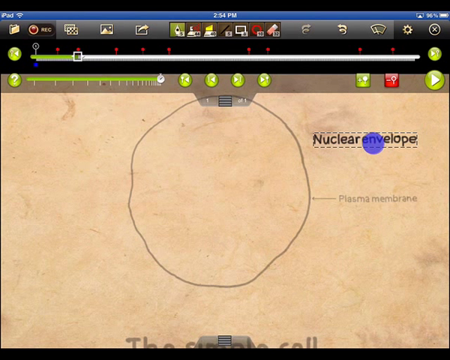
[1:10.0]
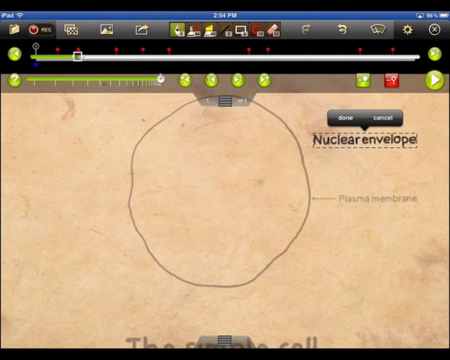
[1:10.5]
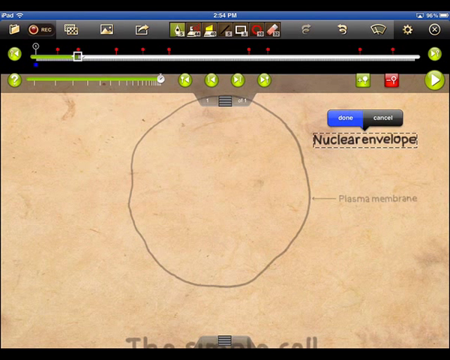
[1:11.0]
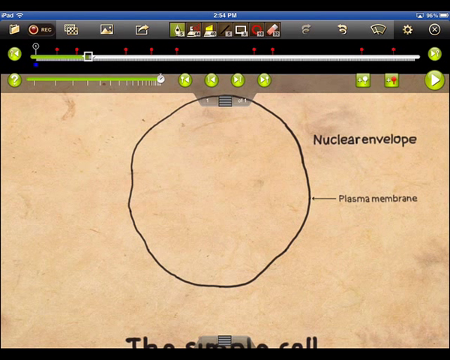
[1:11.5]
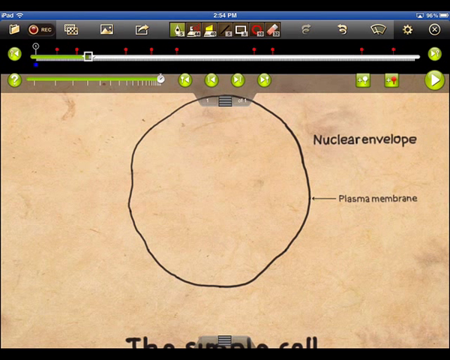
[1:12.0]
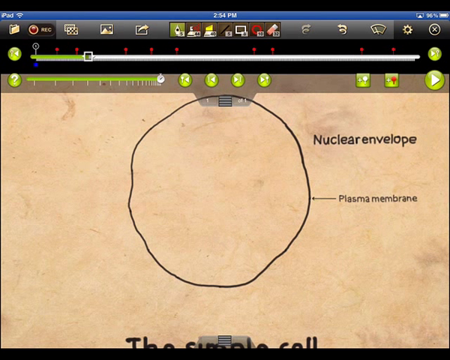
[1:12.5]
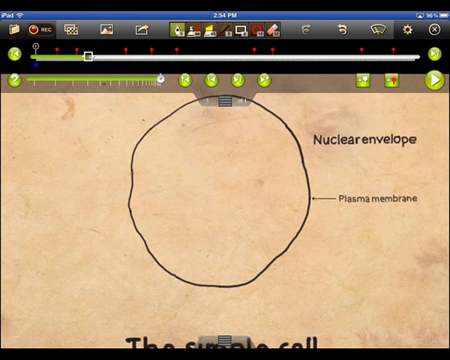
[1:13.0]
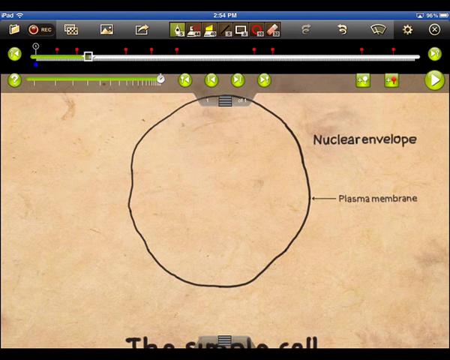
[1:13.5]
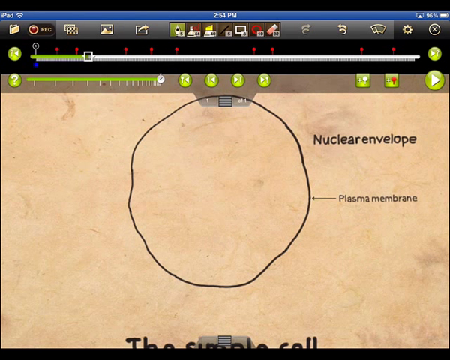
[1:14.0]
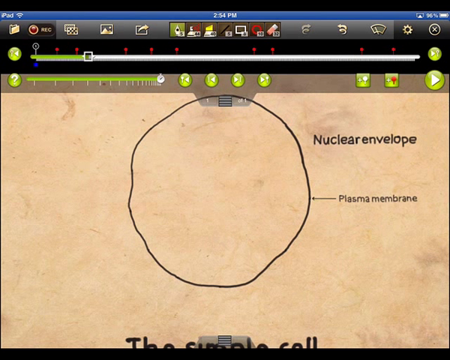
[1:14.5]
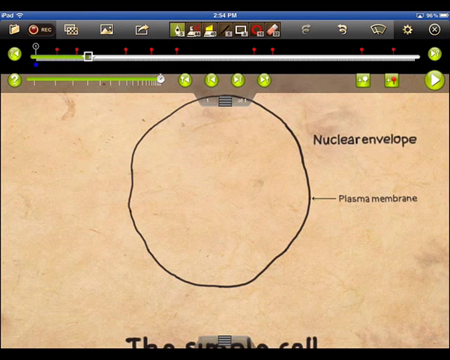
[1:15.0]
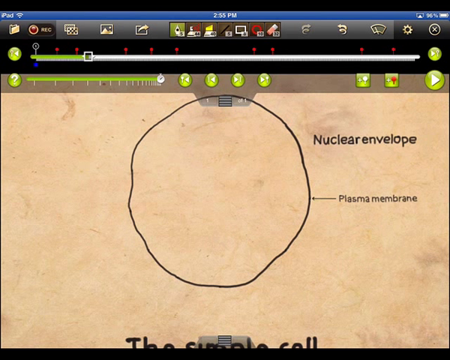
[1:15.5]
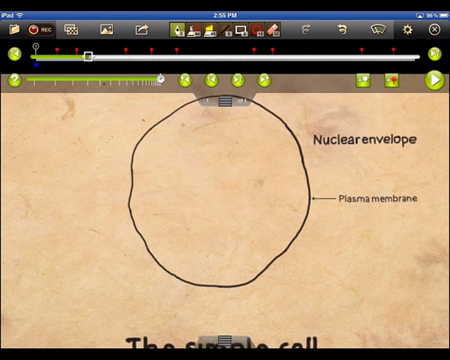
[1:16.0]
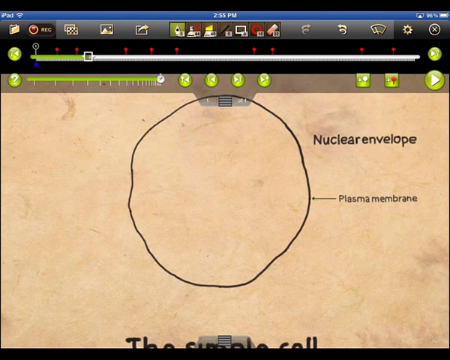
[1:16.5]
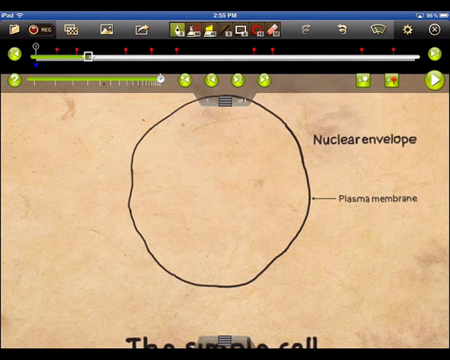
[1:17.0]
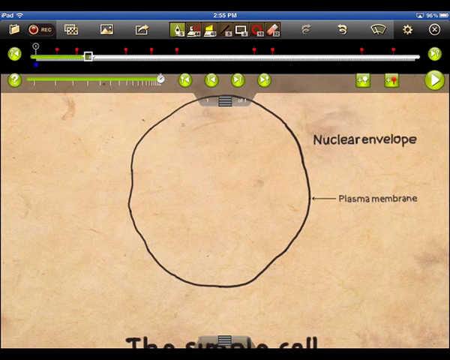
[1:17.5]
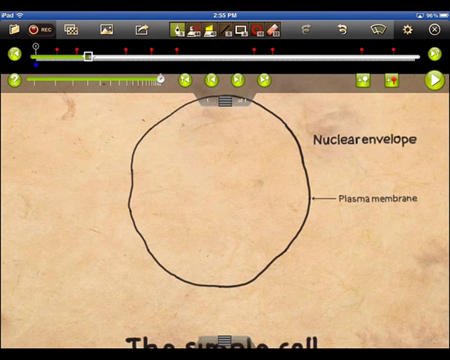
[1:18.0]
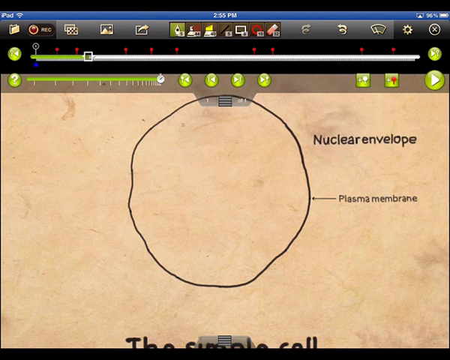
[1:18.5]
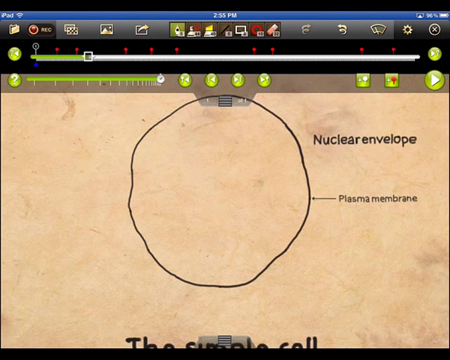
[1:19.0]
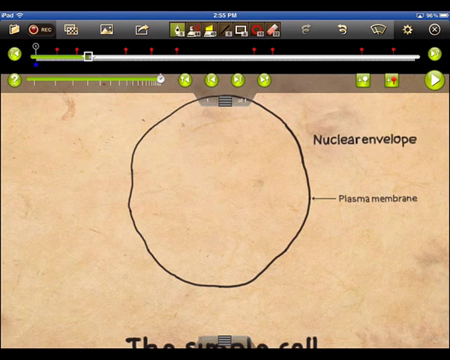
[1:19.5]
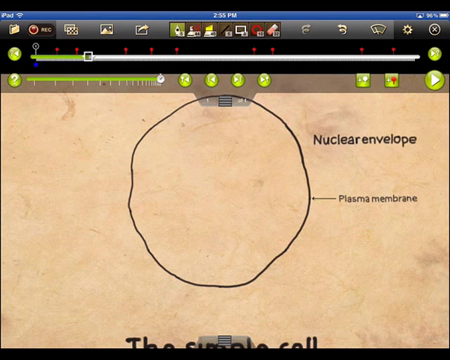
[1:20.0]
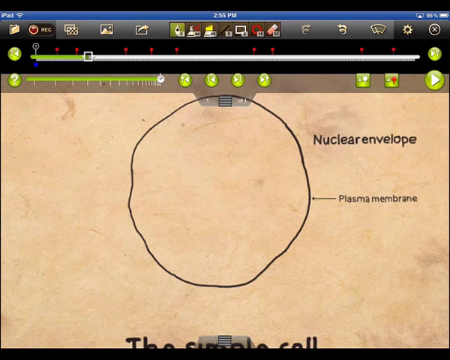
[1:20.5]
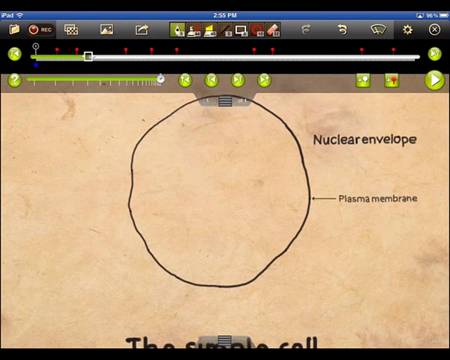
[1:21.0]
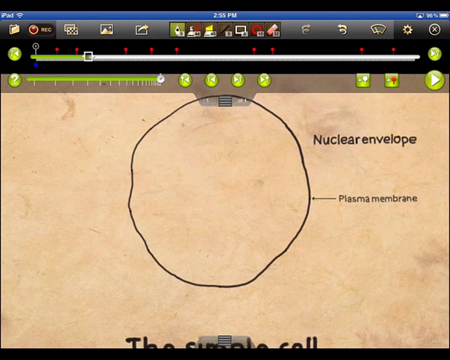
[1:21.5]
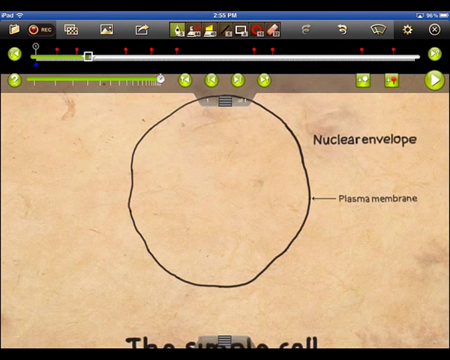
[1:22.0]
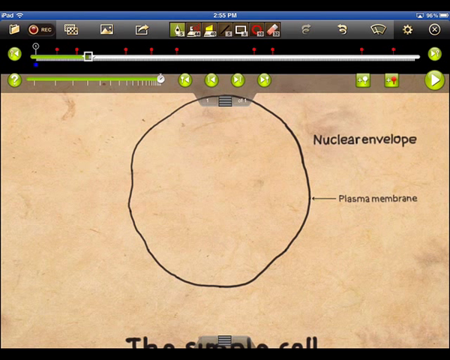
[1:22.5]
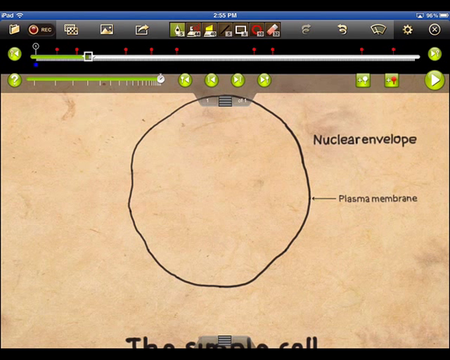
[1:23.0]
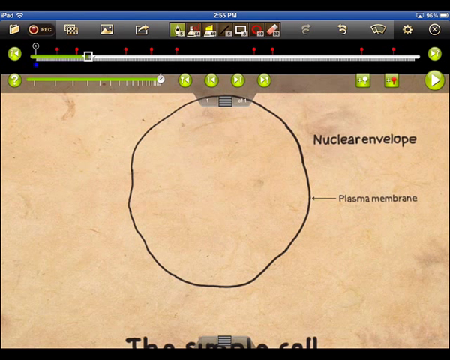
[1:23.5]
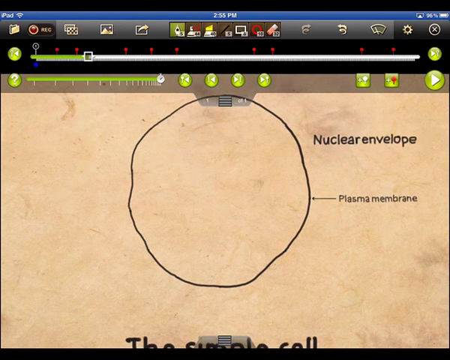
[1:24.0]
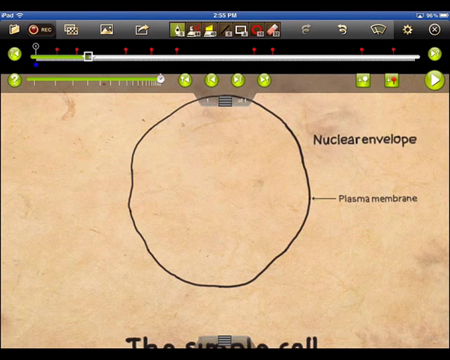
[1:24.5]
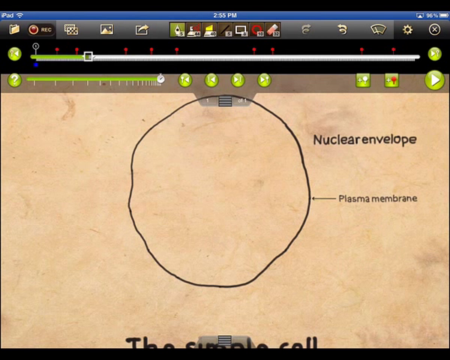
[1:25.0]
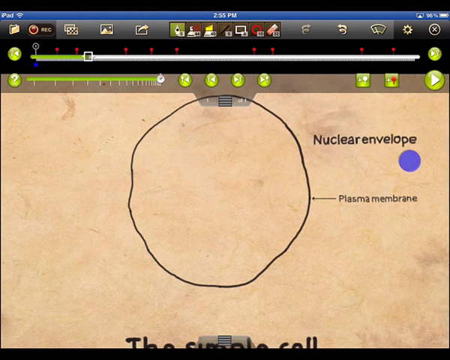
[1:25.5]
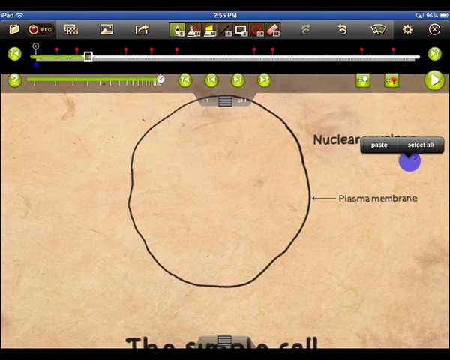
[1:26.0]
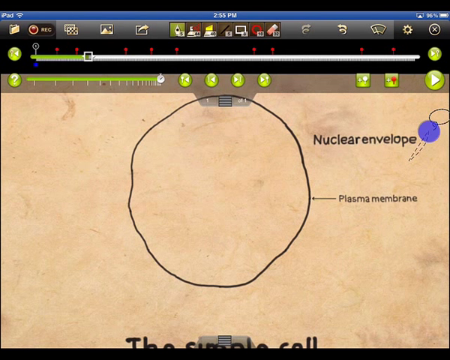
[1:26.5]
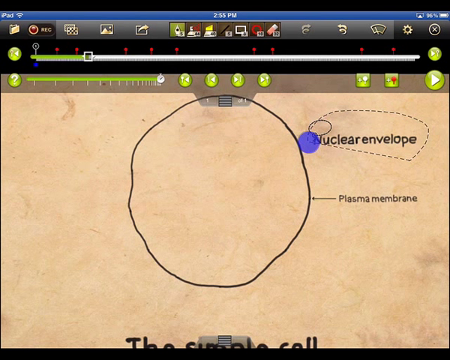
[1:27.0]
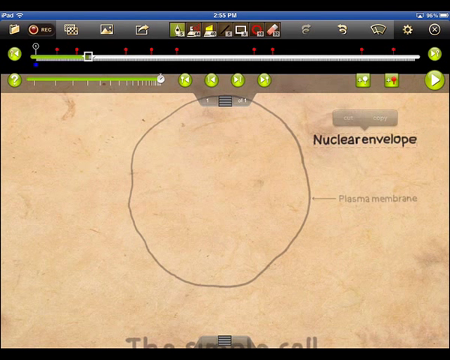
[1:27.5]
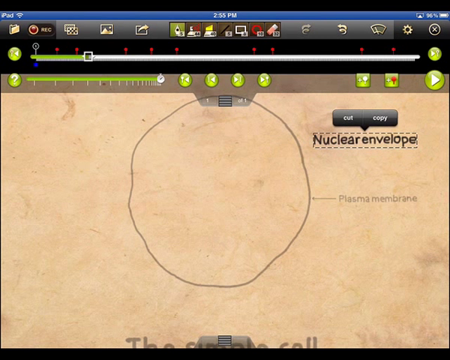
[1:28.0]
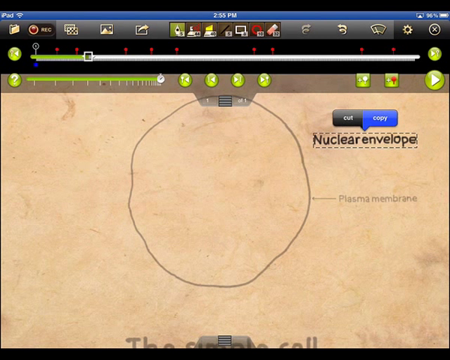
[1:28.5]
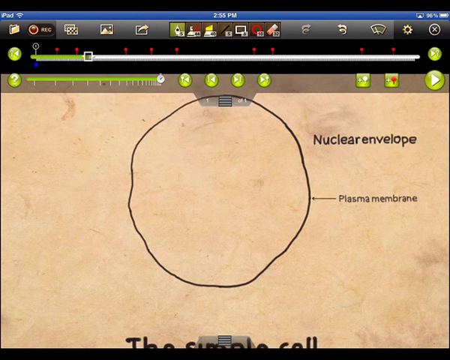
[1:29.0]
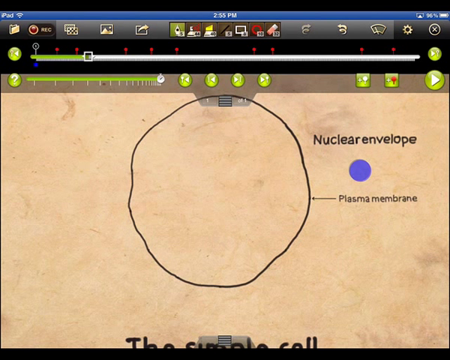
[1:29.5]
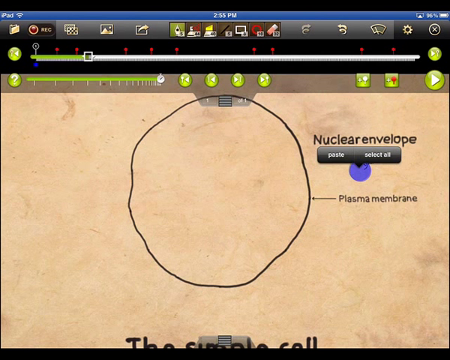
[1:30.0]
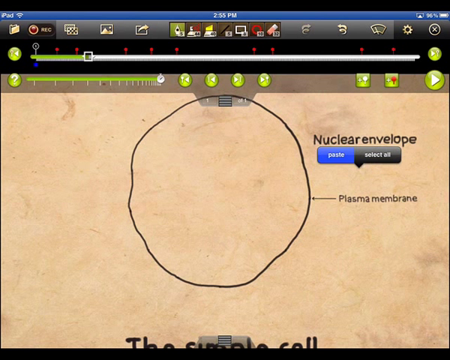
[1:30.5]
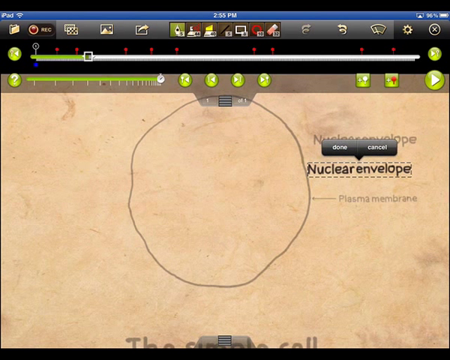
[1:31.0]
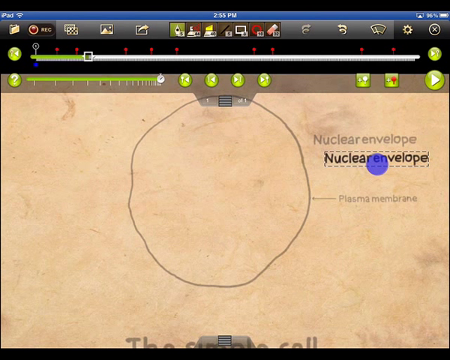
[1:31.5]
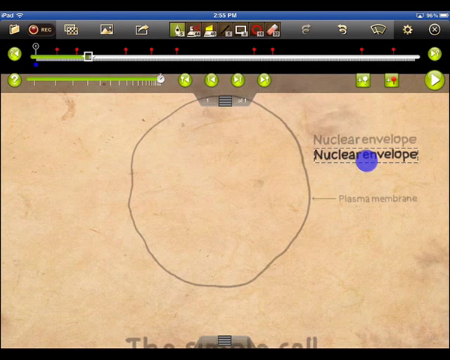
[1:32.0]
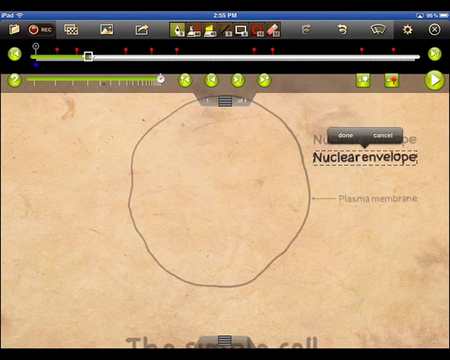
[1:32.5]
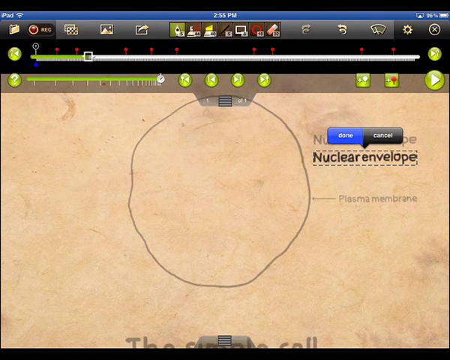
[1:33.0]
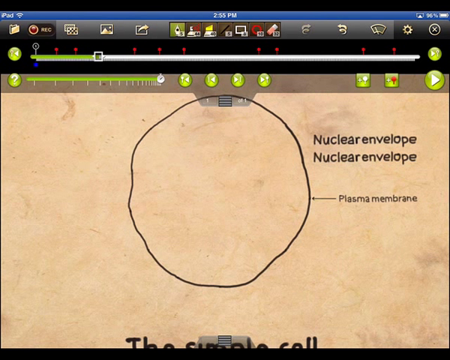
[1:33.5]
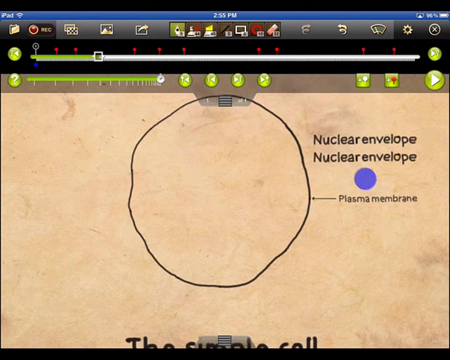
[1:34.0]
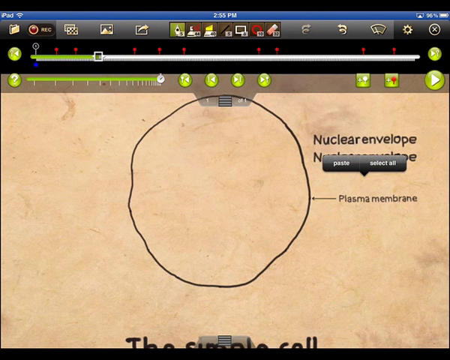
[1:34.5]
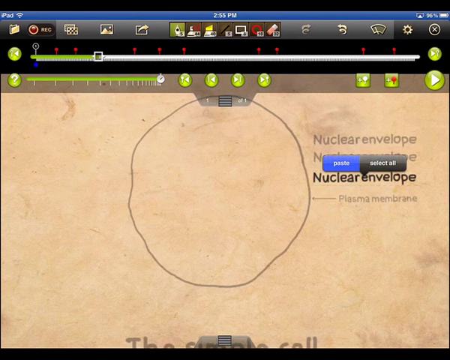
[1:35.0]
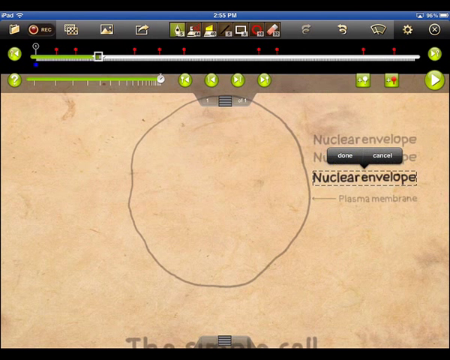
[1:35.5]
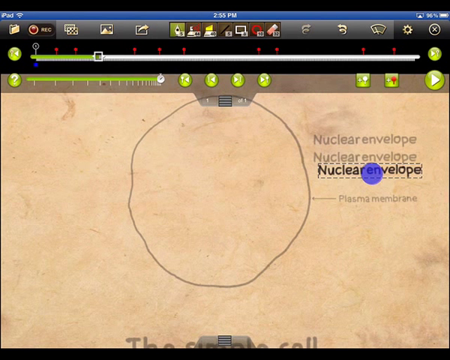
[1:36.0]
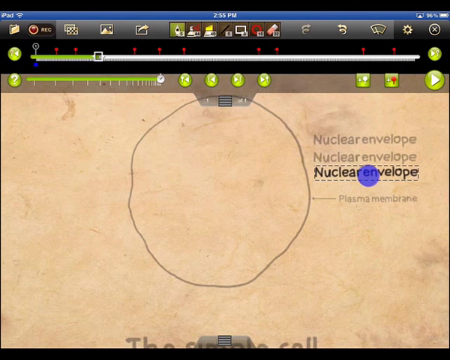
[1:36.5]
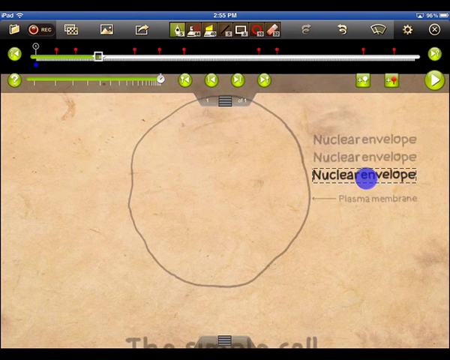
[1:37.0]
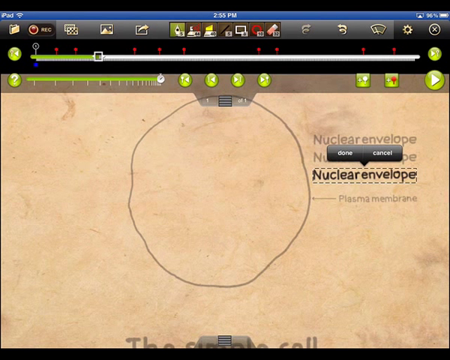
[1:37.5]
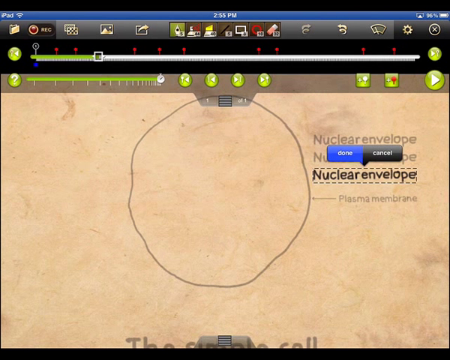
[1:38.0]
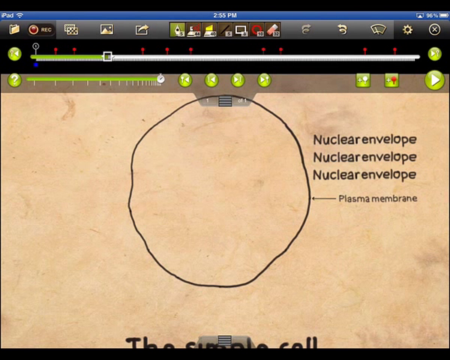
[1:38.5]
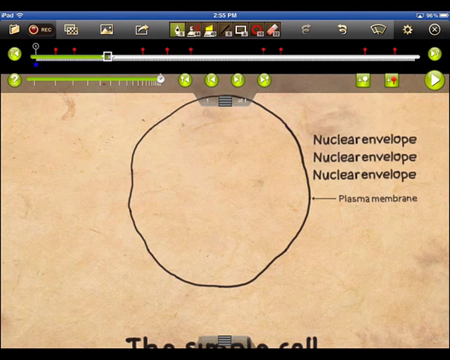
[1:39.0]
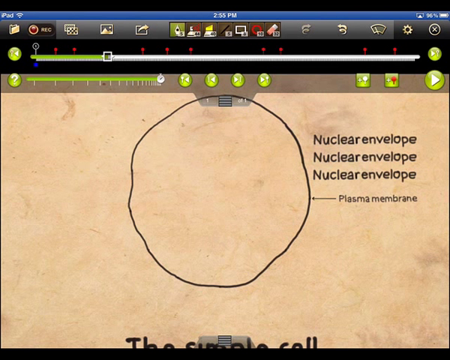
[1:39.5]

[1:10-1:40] The simple cell is now just a circle with the nuclear envelope and plasma membrane labels, and an arrow points to the plasma membrane. The tools are on top of the diagram. The nuclear envelope is circled and pasted underneath, and then another nuclear envelope label is pasted underneath, until it has been pasted three times. The labelled cells that were there before are no longer visible; there is only a plain round circle, with the nuclear envelope pasted three times on the side and the plasma membrane underneath with the arrow still pointing to it. The simple cell is empty.